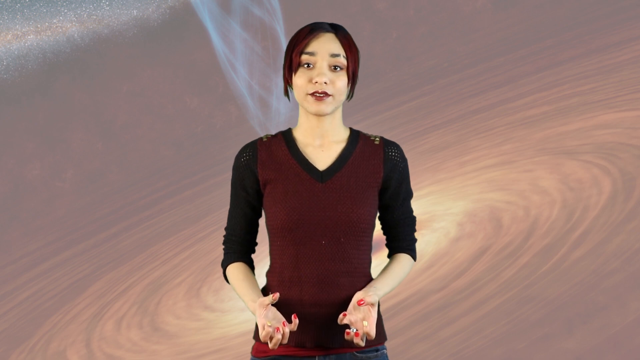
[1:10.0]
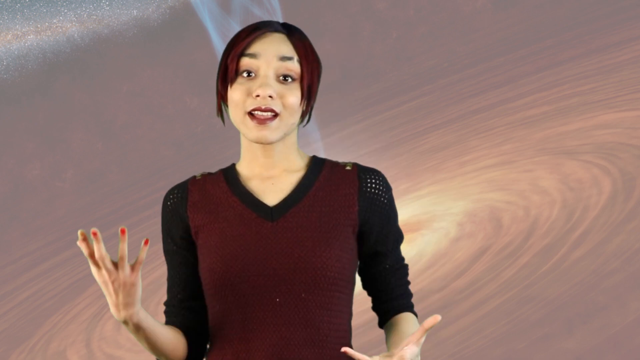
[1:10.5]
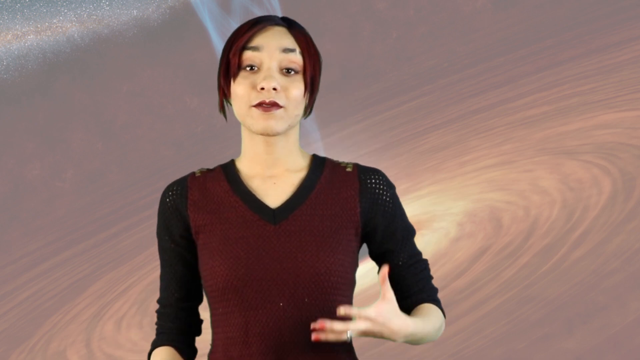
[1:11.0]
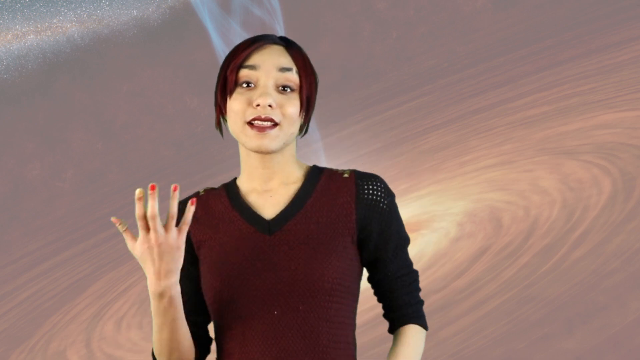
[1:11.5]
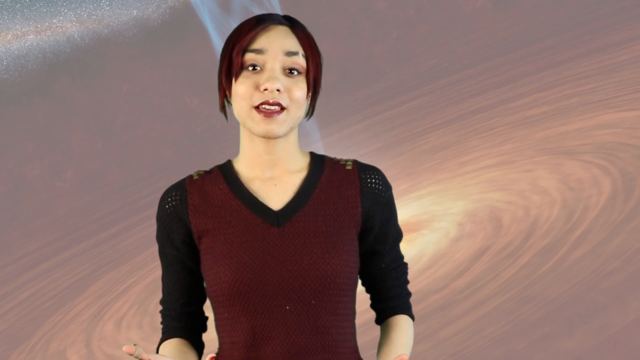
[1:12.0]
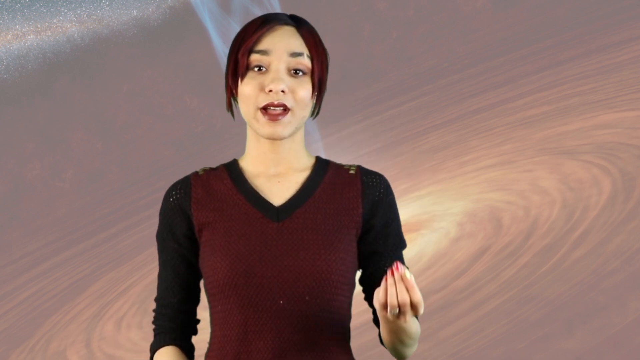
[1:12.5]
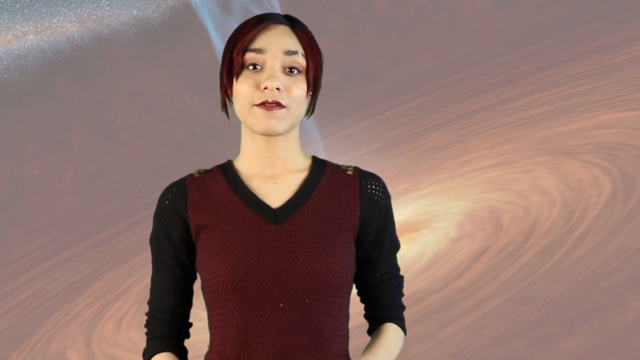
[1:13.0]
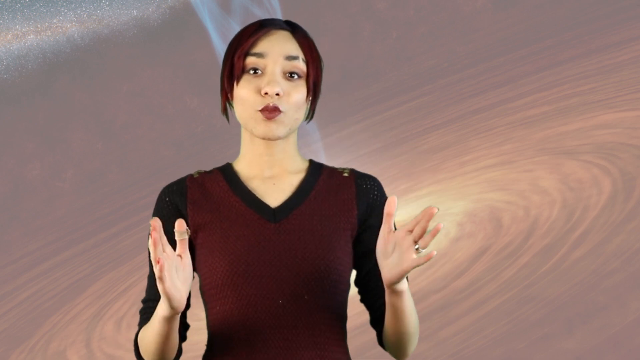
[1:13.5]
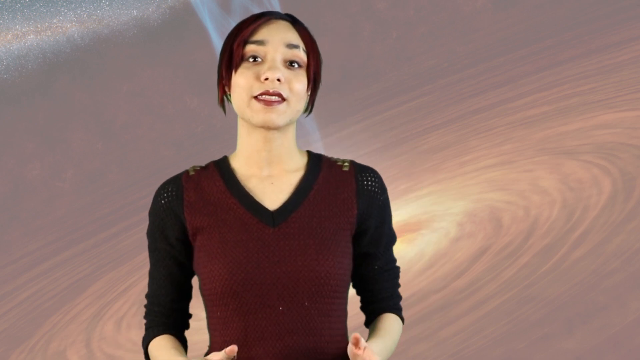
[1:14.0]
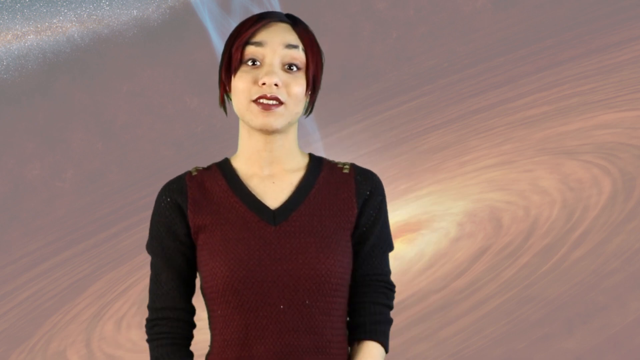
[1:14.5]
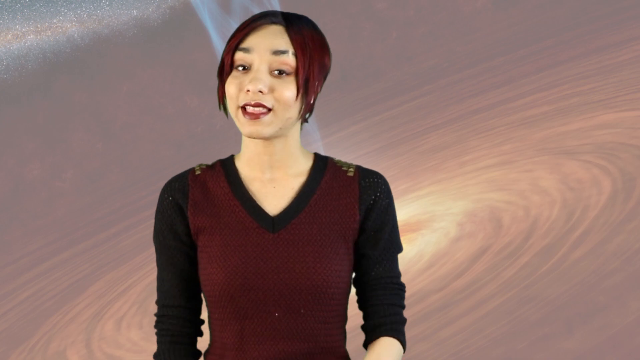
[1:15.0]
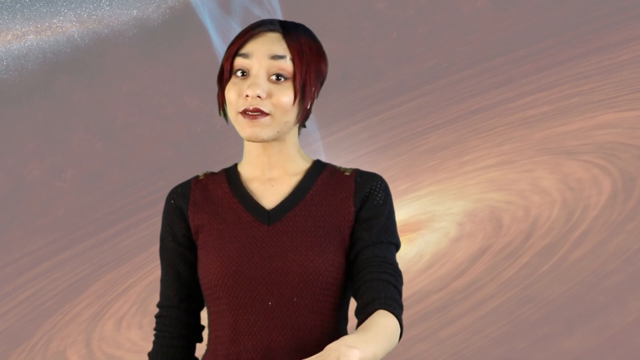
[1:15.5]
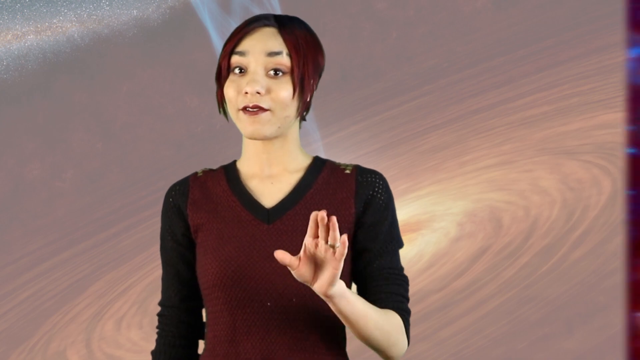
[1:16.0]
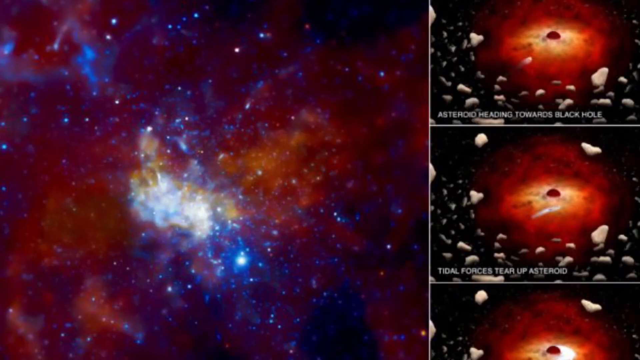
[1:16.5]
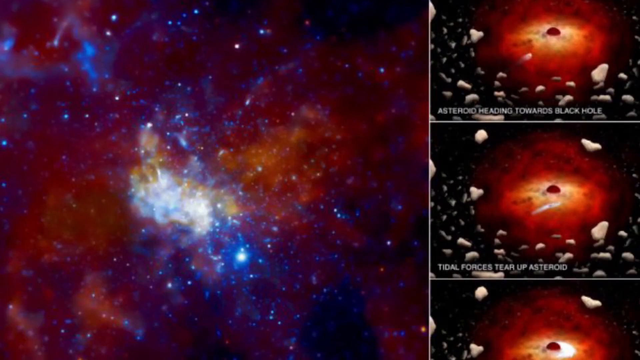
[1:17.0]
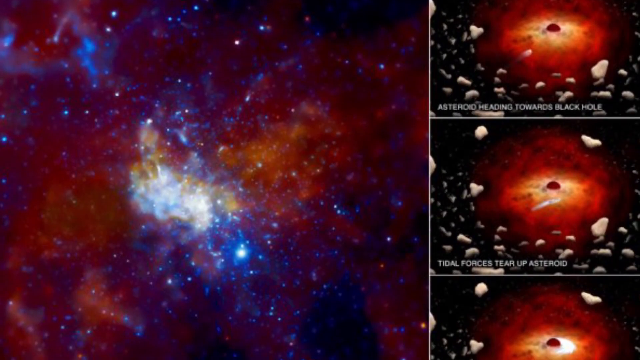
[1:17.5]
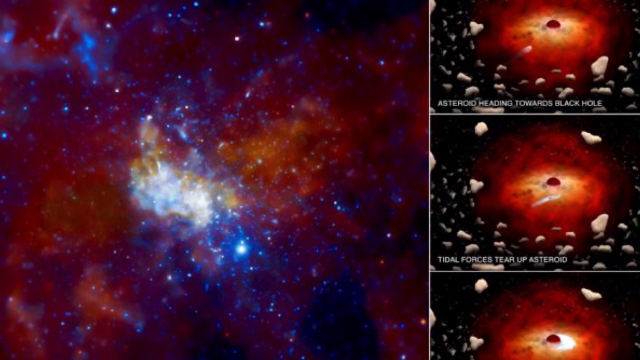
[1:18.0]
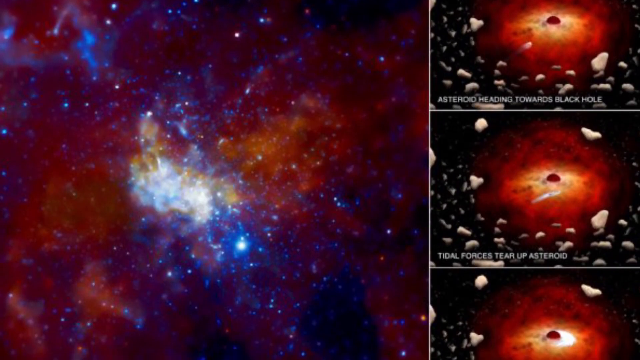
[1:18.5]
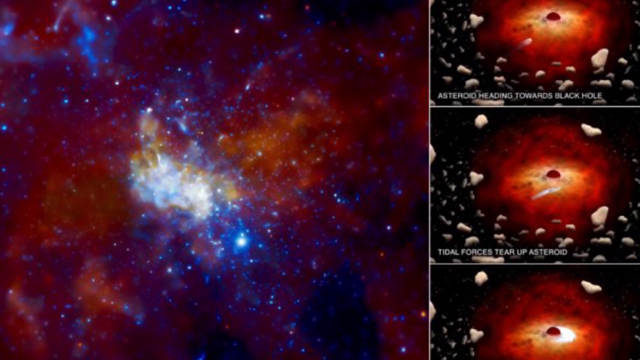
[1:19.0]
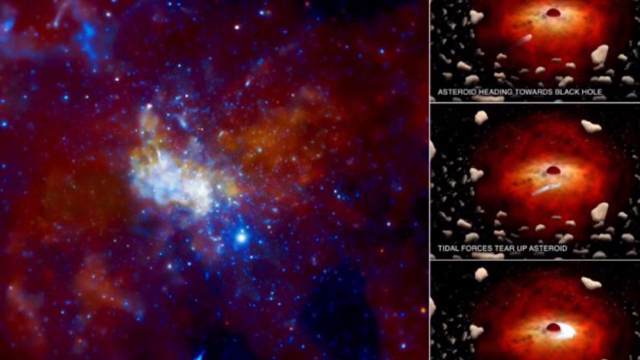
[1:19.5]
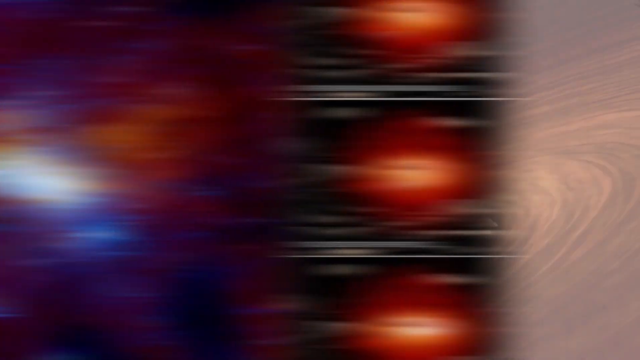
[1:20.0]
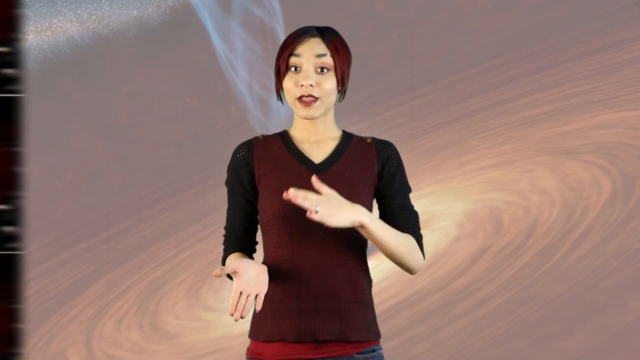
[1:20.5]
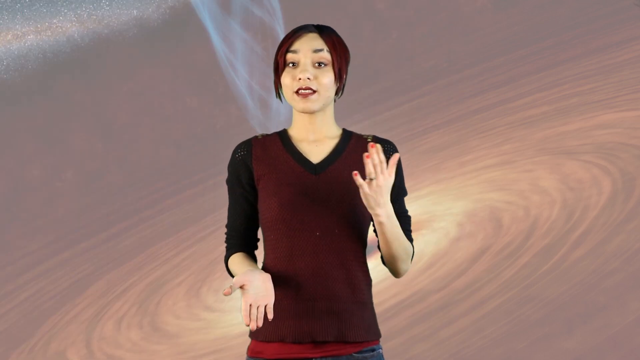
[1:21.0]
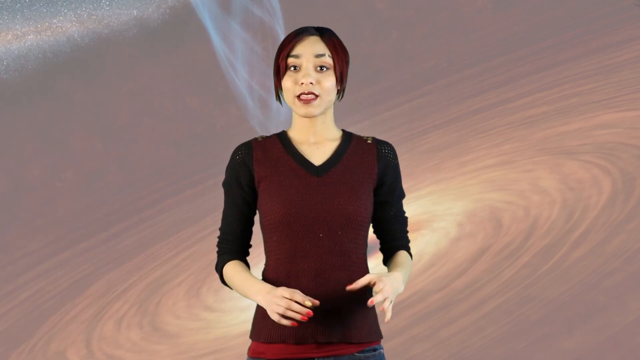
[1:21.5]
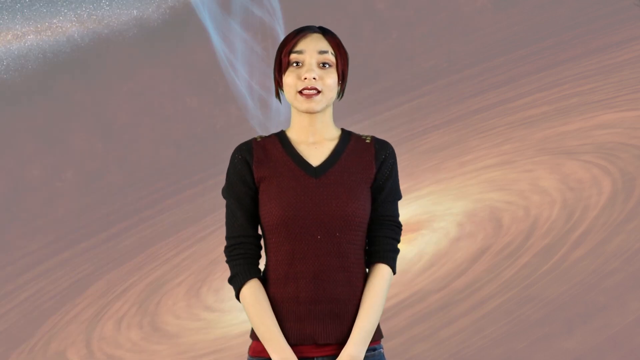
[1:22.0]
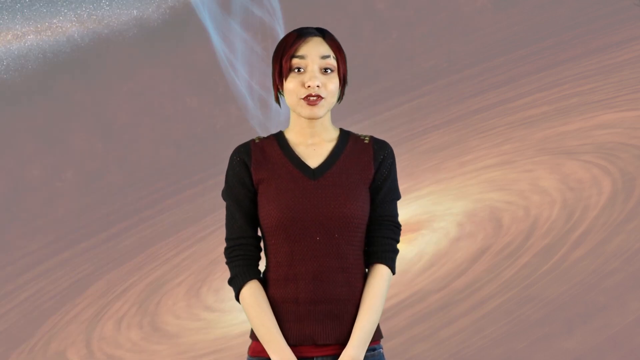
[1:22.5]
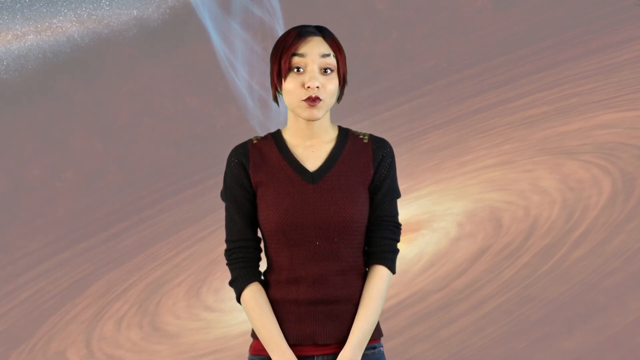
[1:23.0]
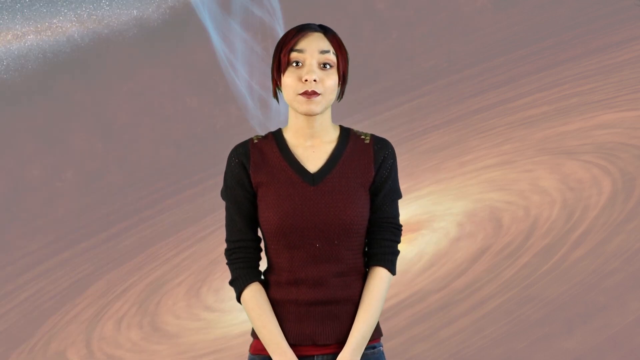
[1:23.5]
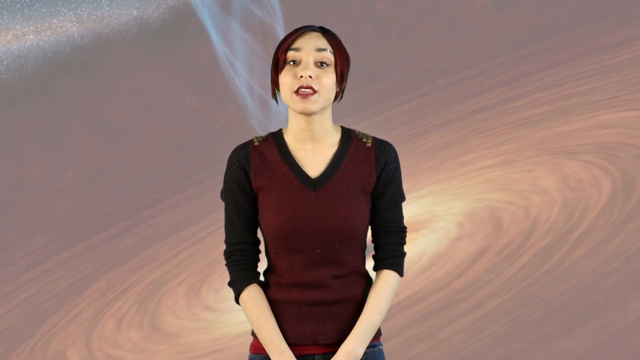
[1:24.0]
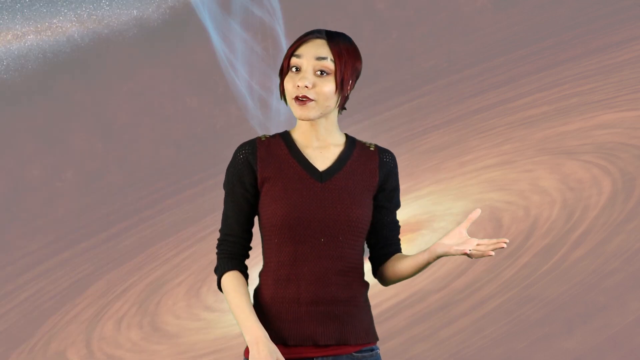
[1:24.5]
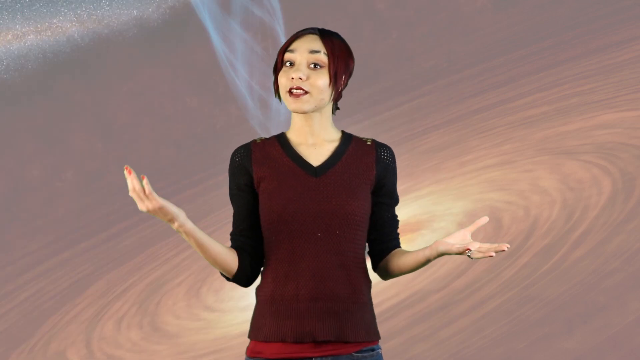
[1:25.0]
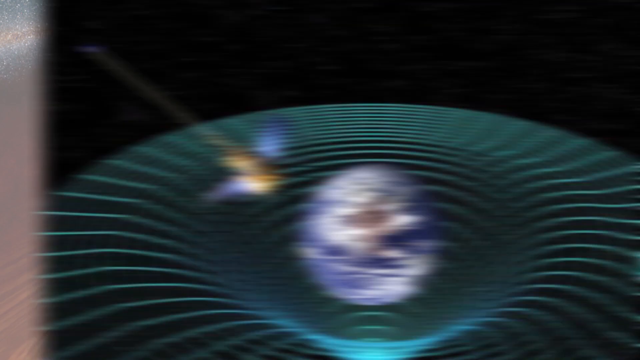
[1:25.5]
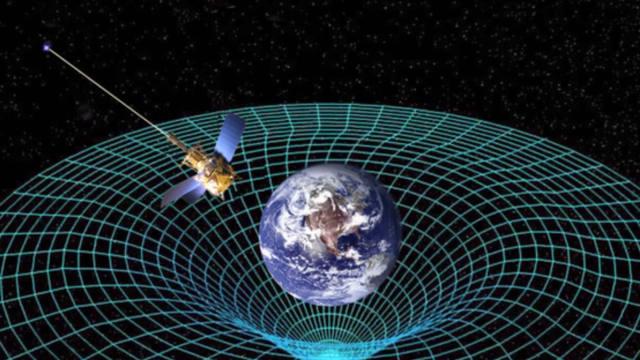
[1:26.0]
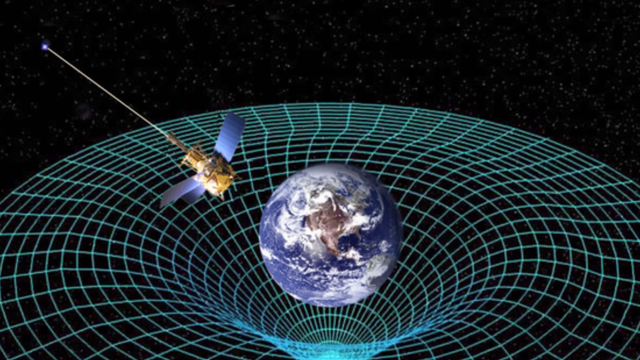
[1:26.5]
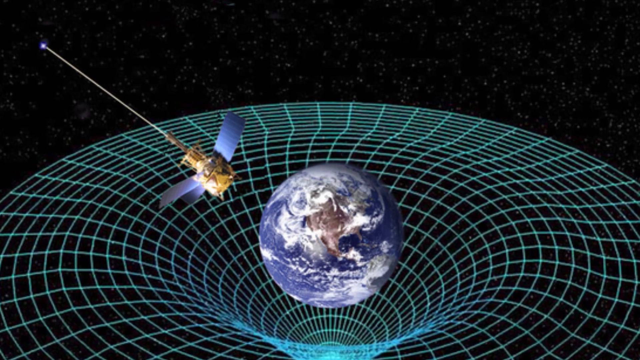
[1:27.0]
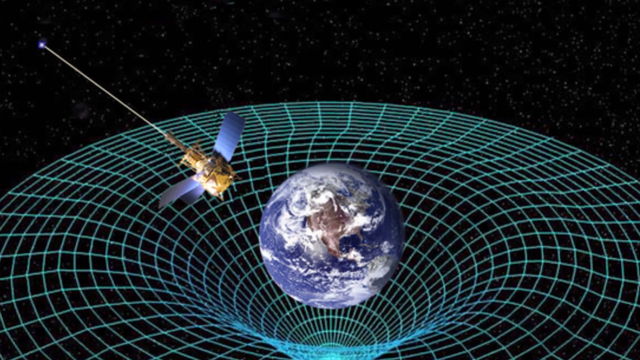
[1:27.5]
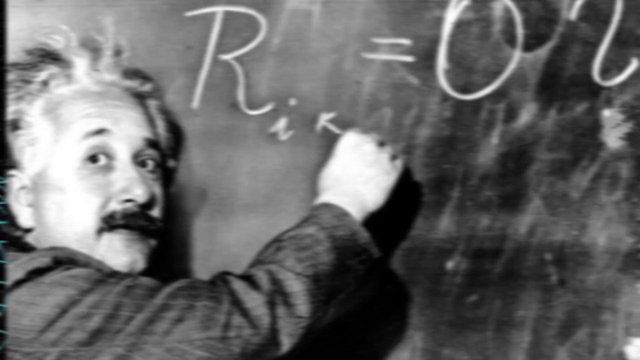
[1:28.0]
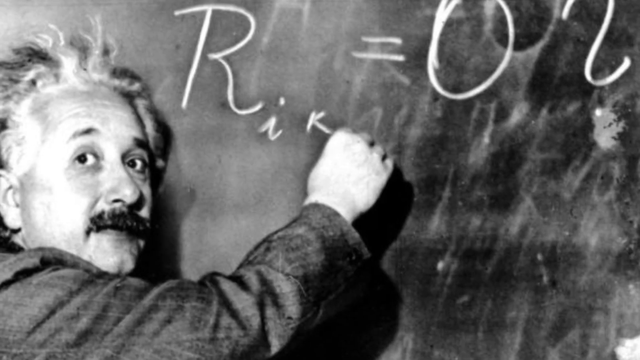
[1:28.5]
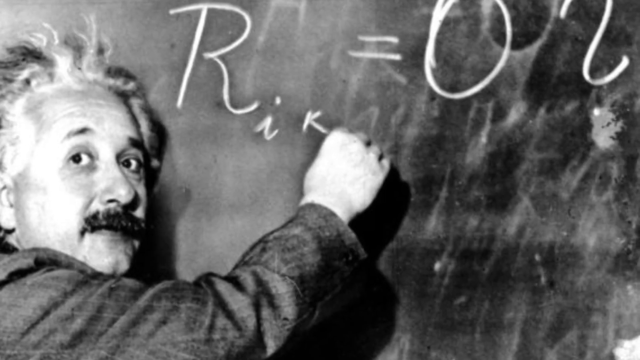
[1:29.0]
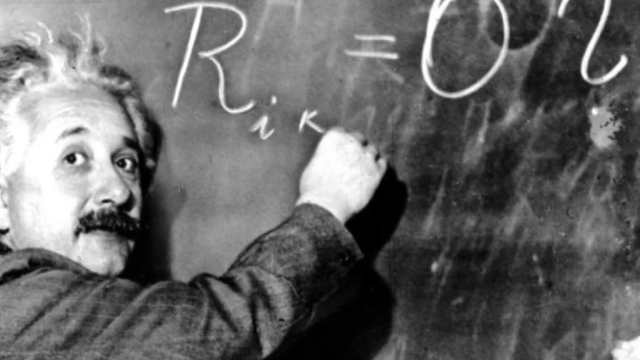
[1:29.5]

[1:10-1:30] A wide shot shows her from the waist up, hands out in front of her, taking them down. She quickly moves her hands, her right hand up past her shoulder and down, her left hand up and down, back and forth a couple of times, then raises them with palms to the side, draws them down and brings them up. The screen then shows a galaxy on the left side, taking up about two-thirds of the screen, and two smaller squares on the right side. The top one is red in the center and black on the outside with little rocks around the bottom, left and right; the bottom one looks pretty much the same. There is white lettering under both in the bottom left corner. As it slowly scrolls down, another one appears on the right side. That side then swipes to the left and the video returns to her talking, her left hand out in front of her palm up and her right hand moving back and forth in front of her. She drops her hands in front of her, leans forward a little as she talks, moves back a little, brings her left and then her right hand up, palms up, and back down. Next is a black space look, with a globe coming out in the center toward the bottom. A grid comes up and then spreads out left and right, there is teal color up to the left of it, and a little satellite appears as the view slowly zooms in. It cuts to Albert Einstein writing on a chalkboard; he is on the left side facing inward toward the chalkboard on the right, looking back over his shoulder toward the camera as the view slowly moves in and a little to the right.